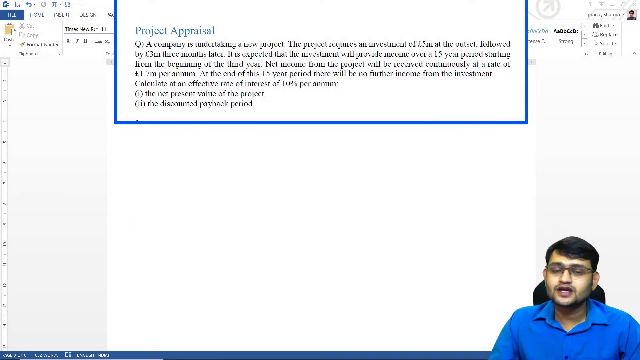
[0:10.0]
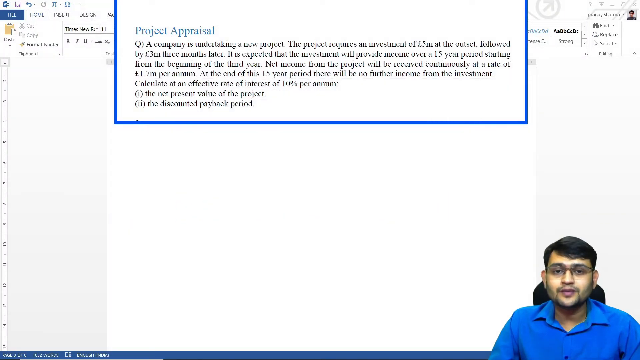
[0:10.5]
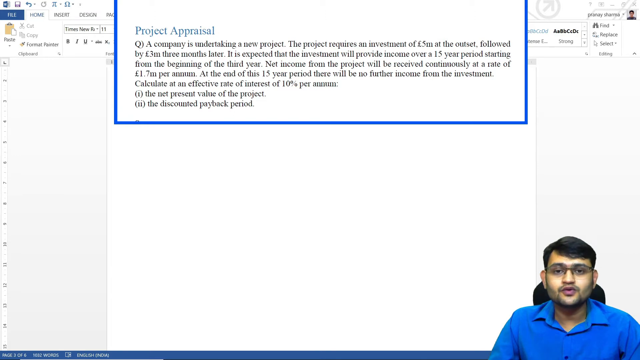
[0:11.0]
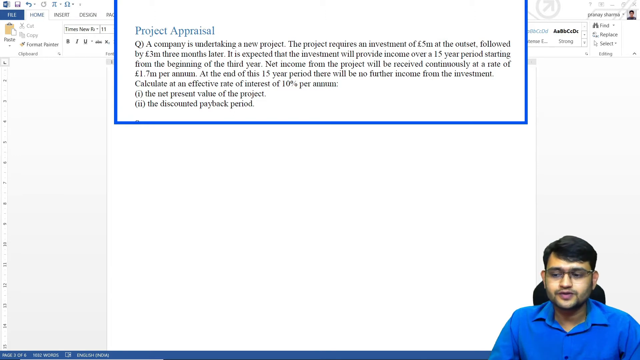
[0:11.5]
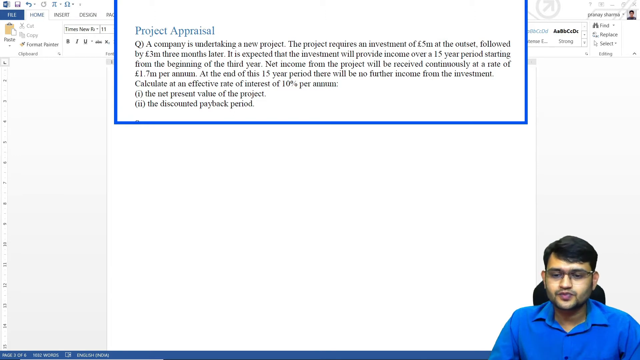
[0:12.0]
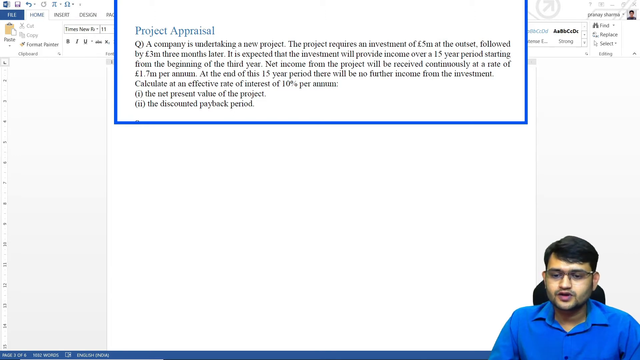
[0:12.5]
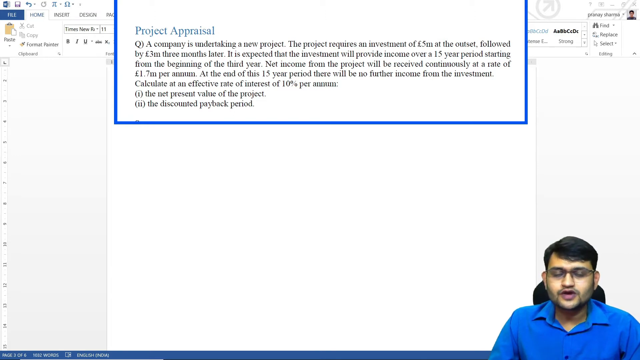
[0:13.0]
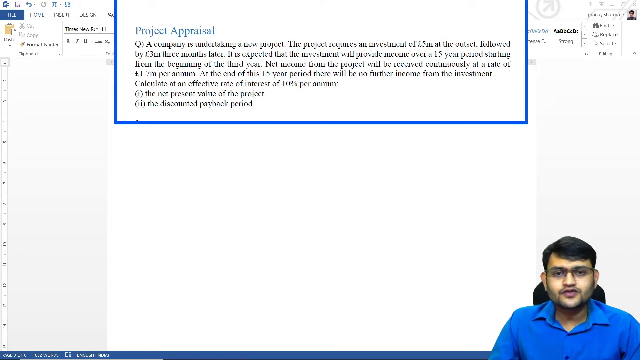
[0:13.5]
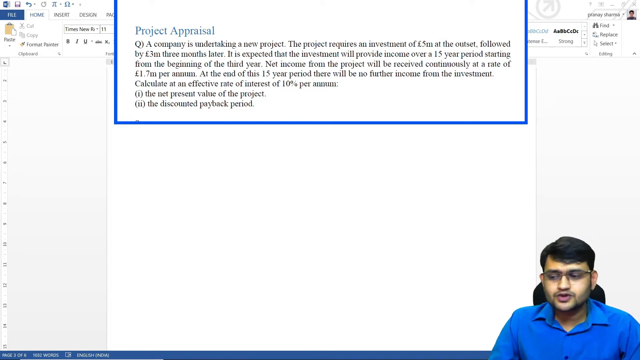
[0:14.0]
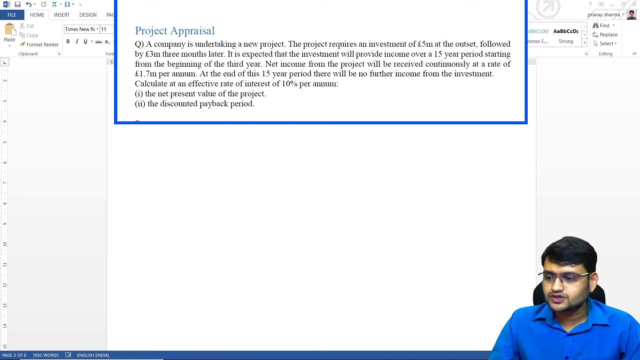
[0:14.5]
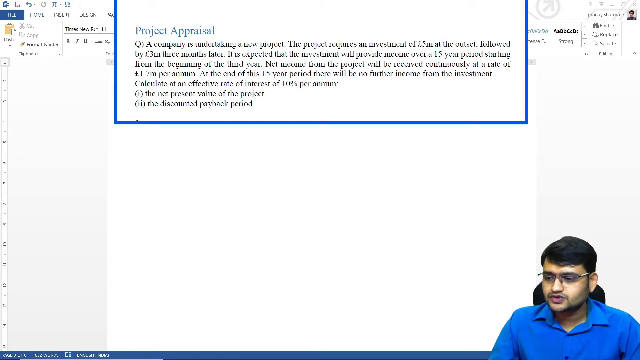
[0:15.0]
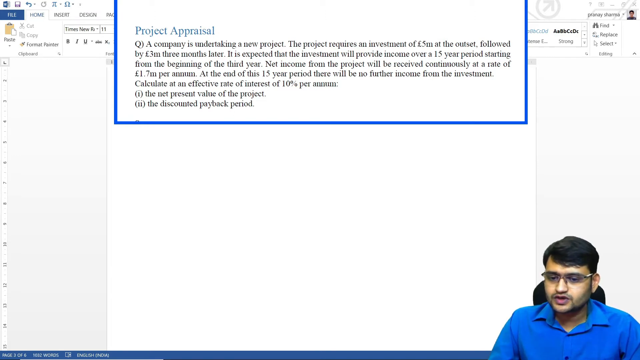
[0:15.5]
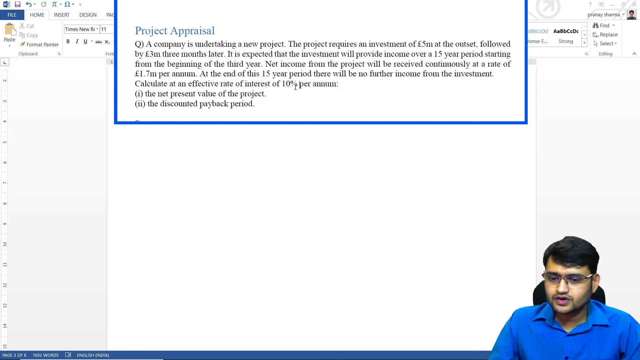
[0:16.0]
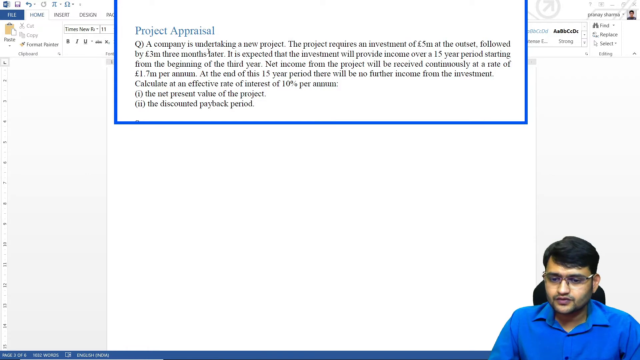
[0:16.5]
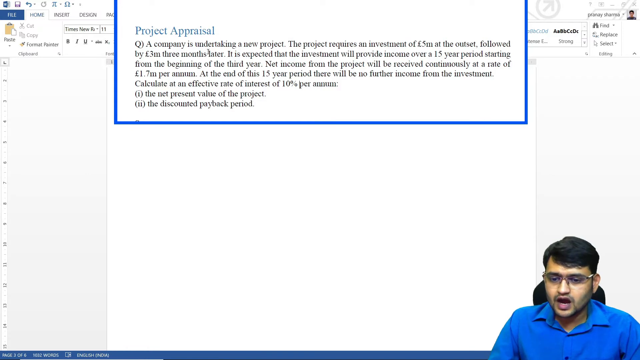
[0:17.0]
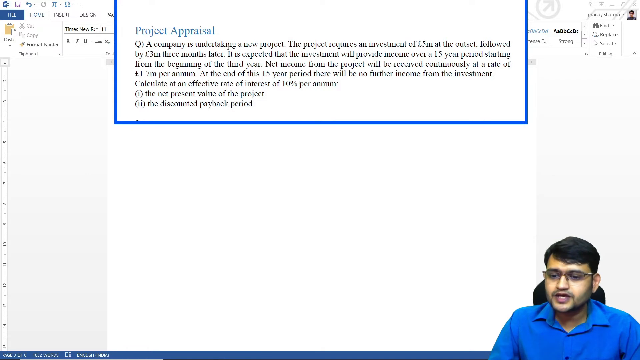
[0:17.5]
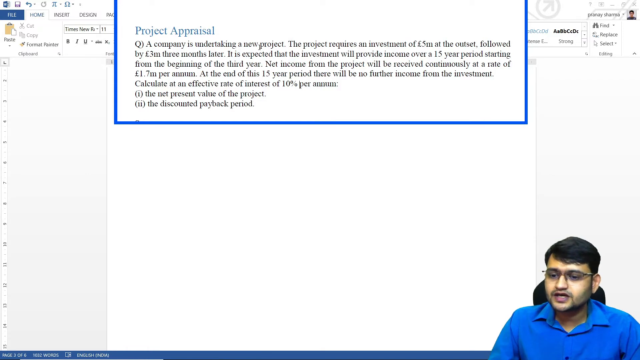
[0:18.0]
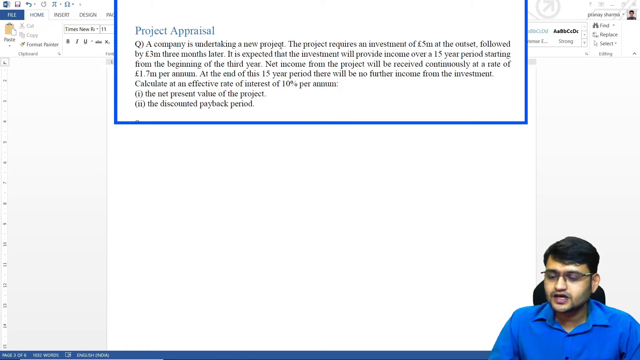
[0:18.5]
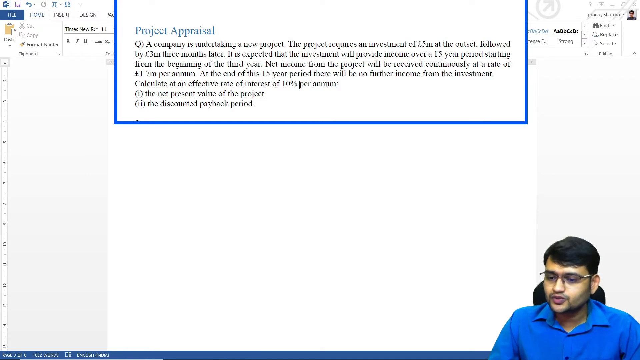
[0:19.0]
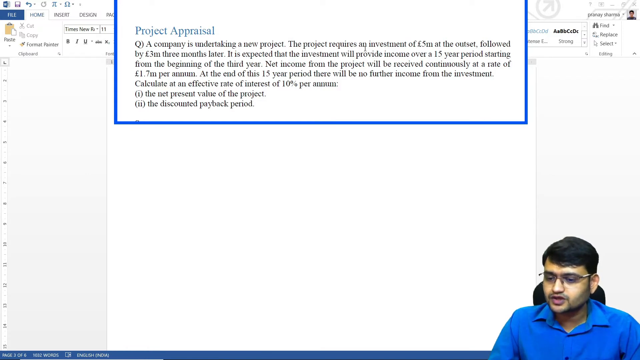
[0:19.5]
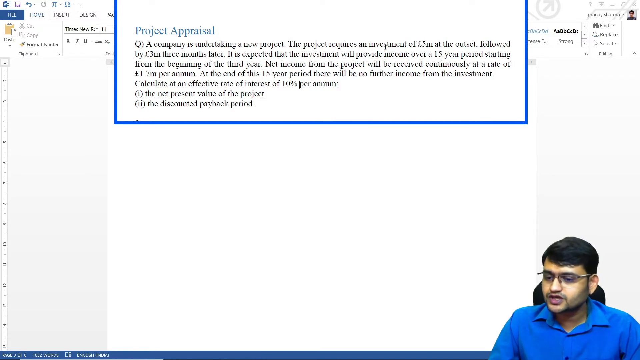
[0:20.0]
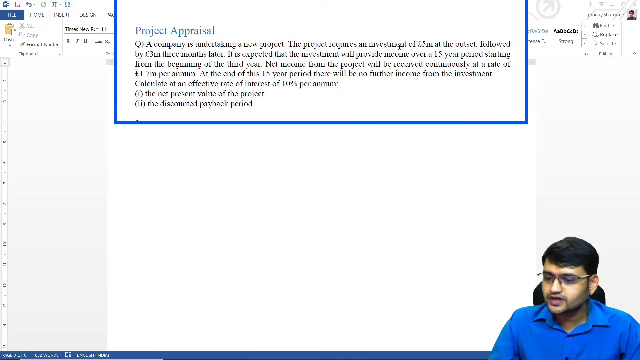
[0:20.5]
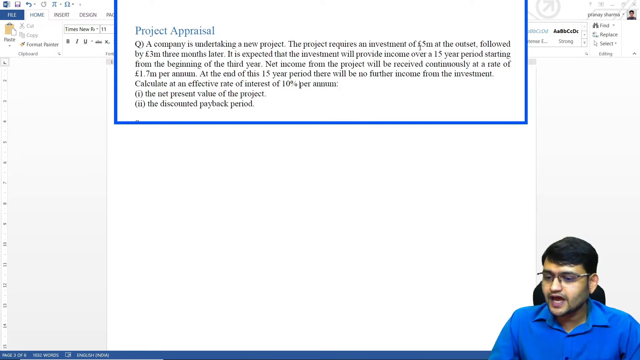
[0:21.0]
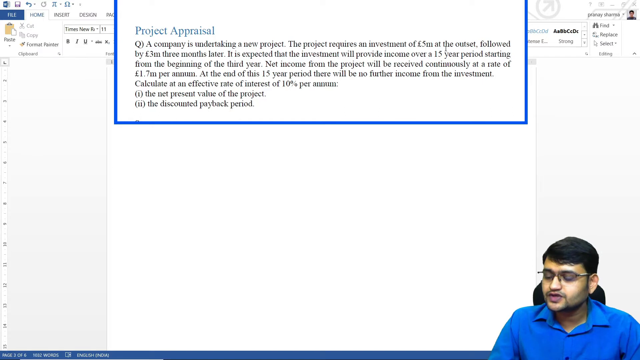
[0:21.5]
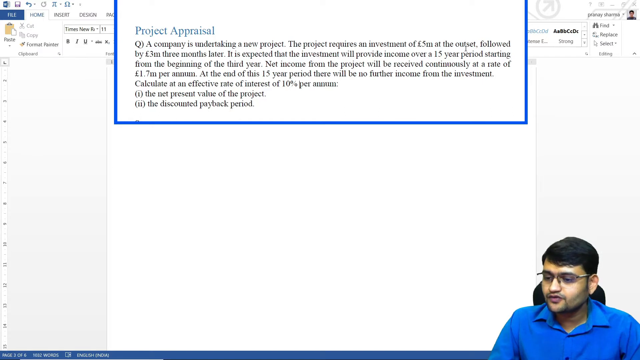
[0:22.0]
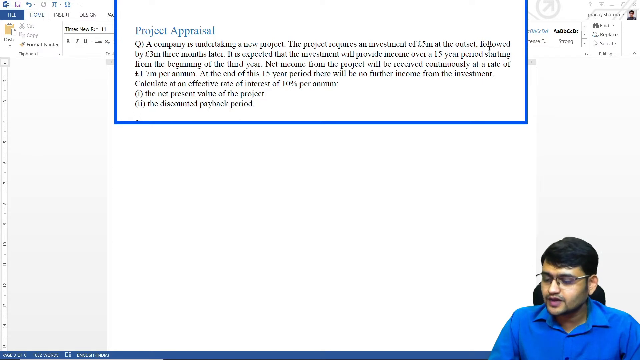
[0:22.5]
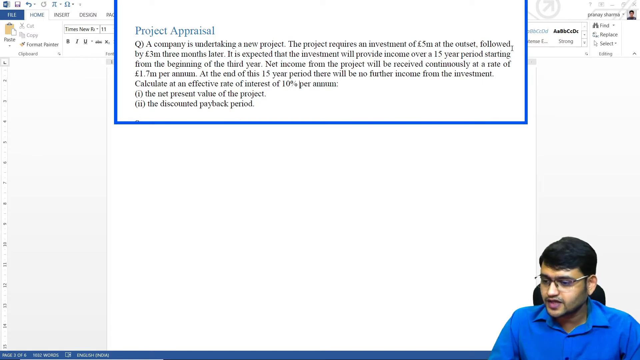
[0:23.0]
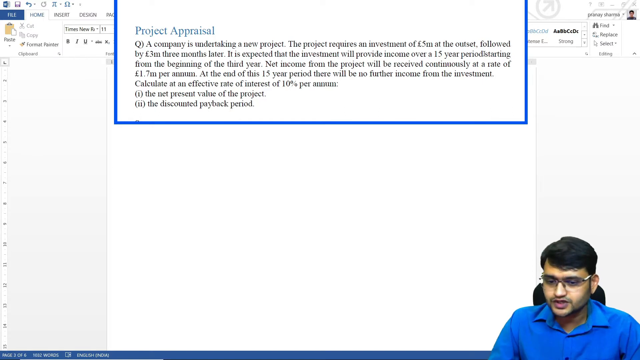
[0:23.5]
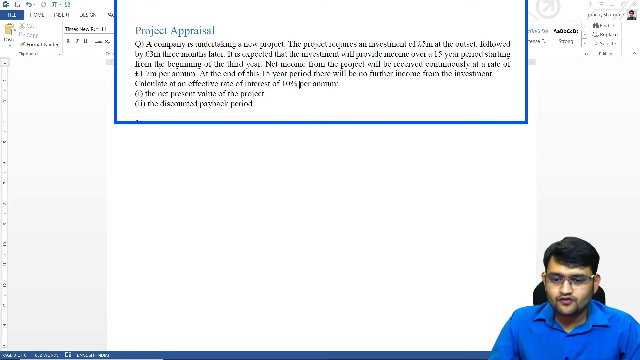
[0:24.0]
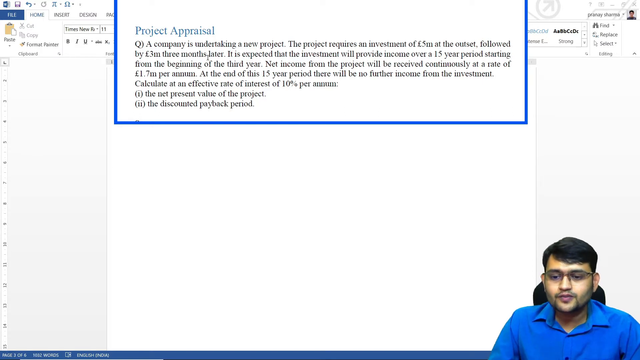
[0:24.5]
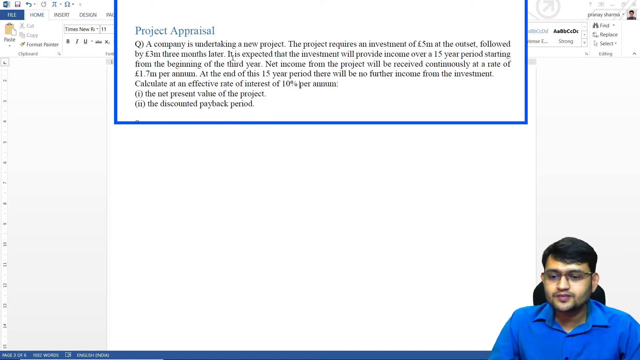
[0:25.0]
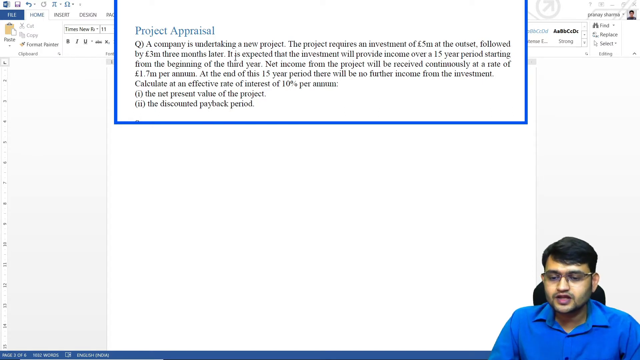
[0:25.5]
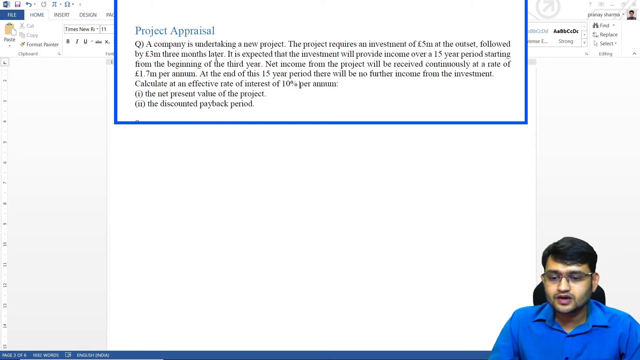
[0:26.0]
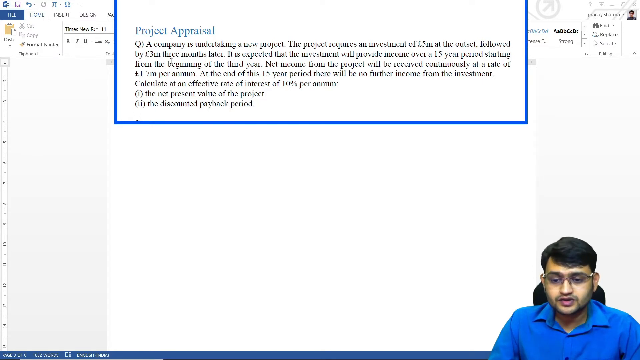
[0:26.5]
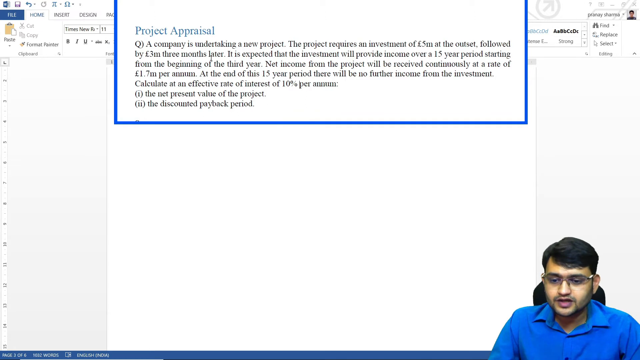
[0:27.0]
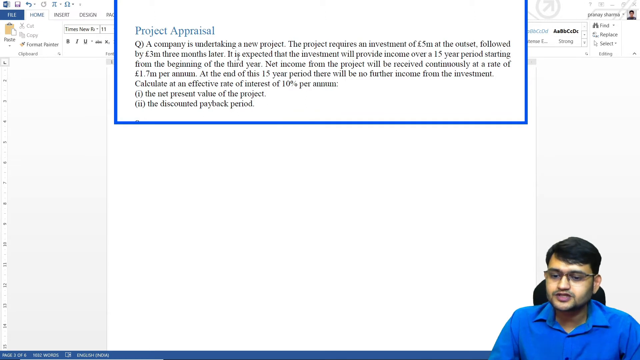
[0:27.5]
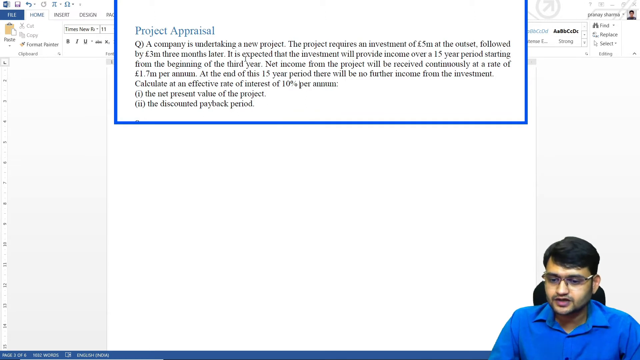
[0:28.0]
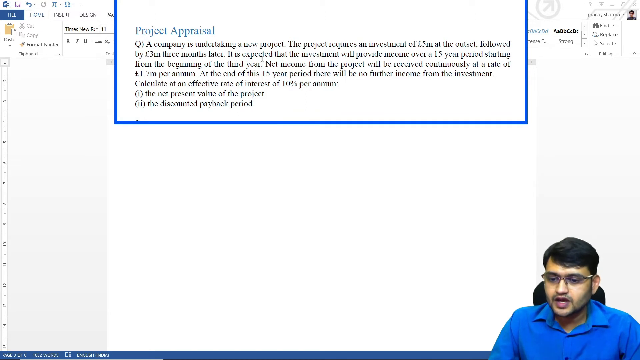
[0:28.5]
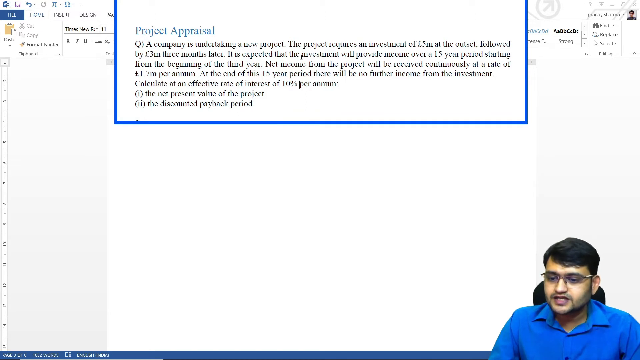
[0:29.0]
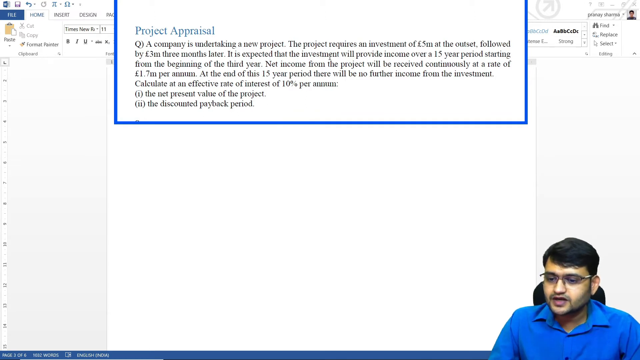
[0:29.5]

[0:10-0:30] The Indian man continues talking to the viewer while moving his cursor over the first sentences in the blue rectangle: "a company is undertaking a new project" and the sentences about the investment of five million pounds at the outset followed by three million pounds three months later. He stops briefly at the end of the words "three months later" at the end of the second sentence, moves the cursor back a little over those words, and then continues on to the third sentence, "it is expected that the investment will provide income over a 15 year period, starting from the beginning of the third year."